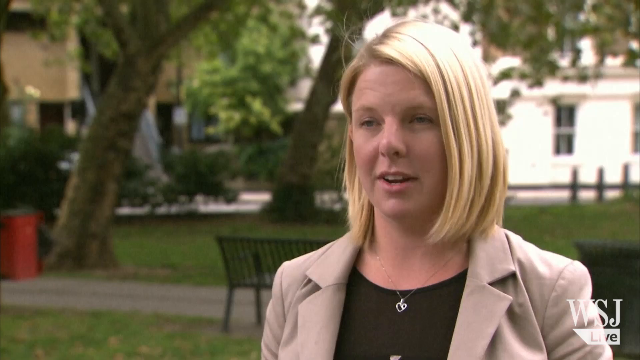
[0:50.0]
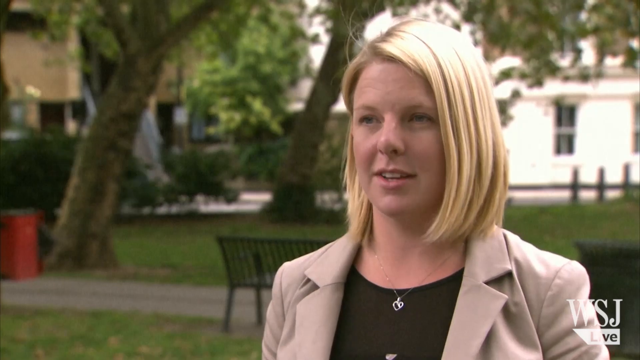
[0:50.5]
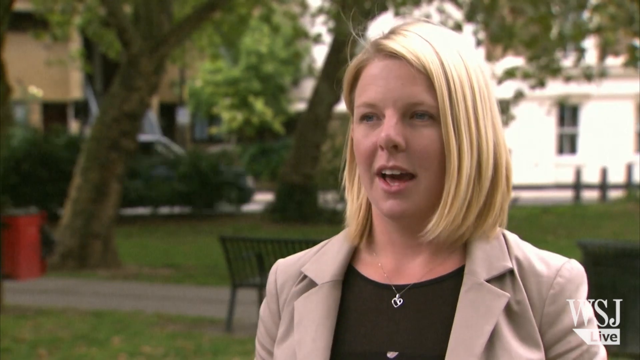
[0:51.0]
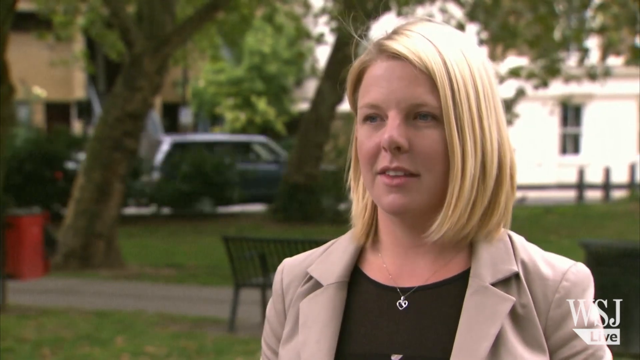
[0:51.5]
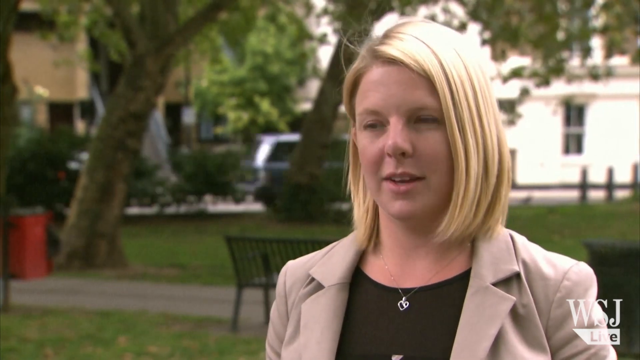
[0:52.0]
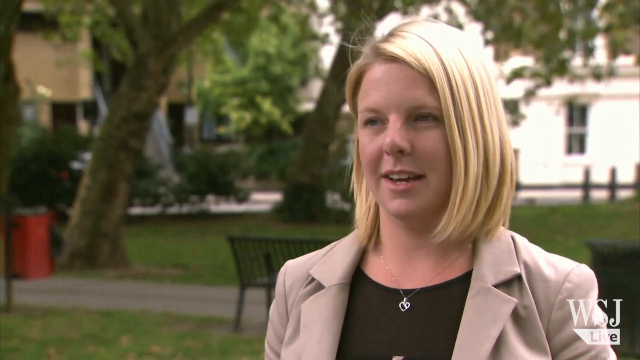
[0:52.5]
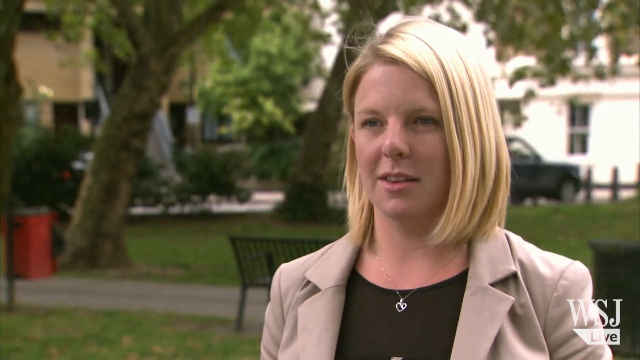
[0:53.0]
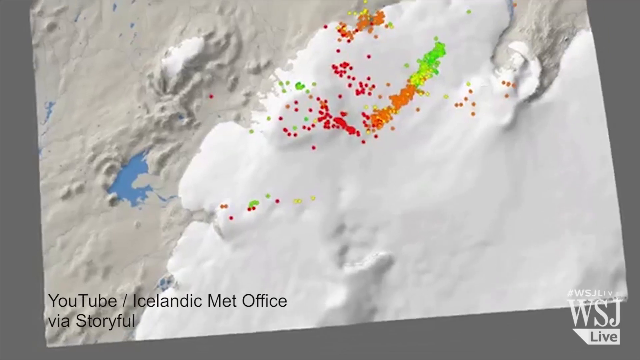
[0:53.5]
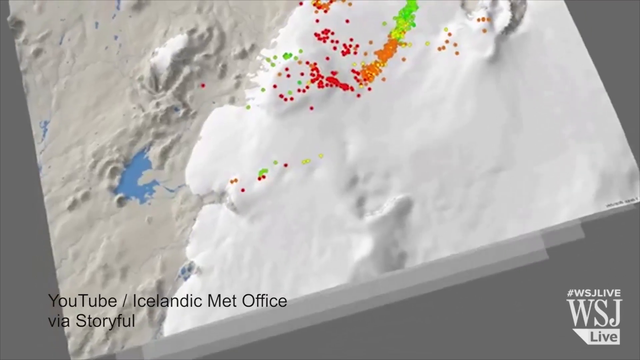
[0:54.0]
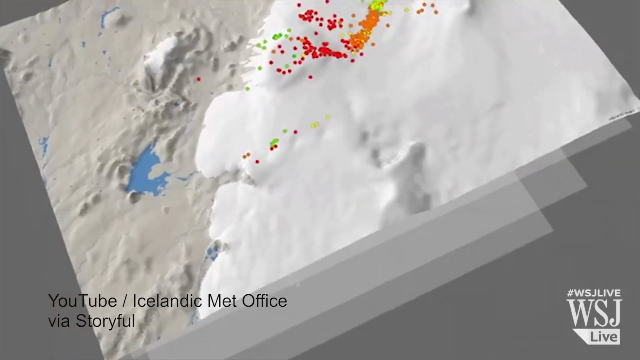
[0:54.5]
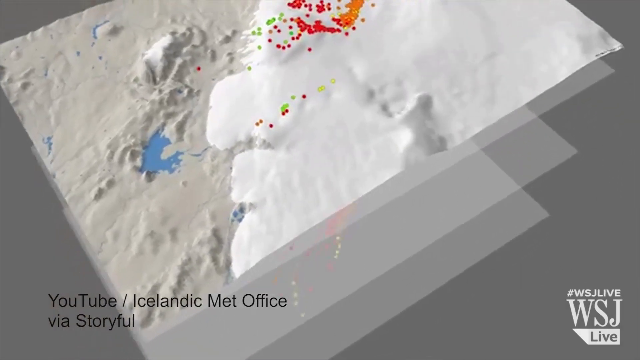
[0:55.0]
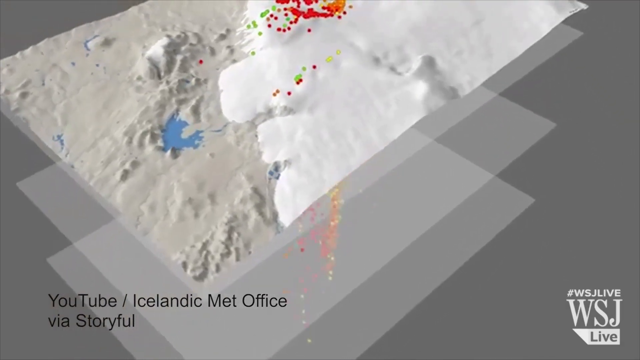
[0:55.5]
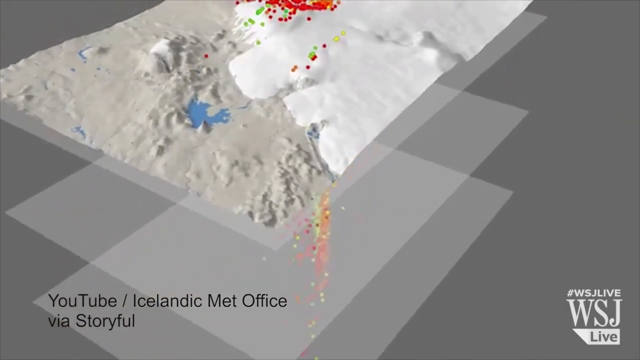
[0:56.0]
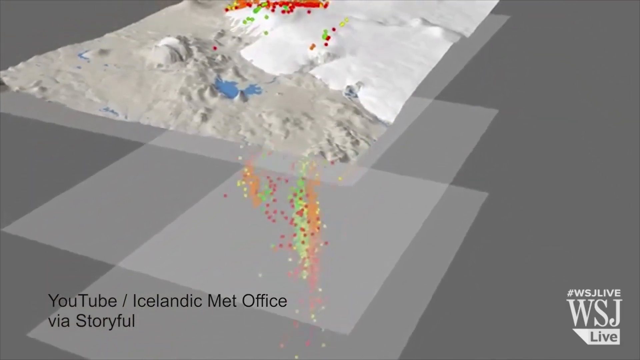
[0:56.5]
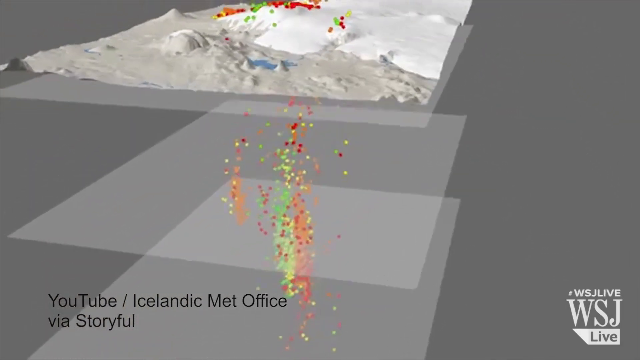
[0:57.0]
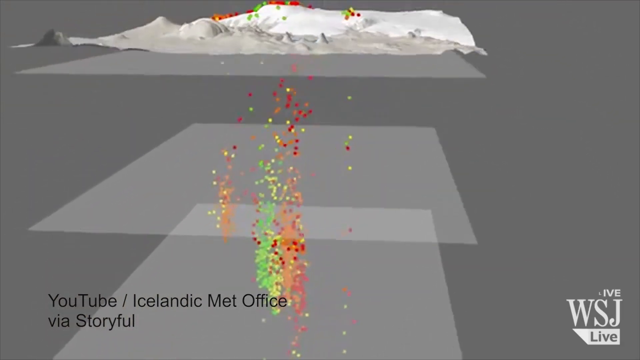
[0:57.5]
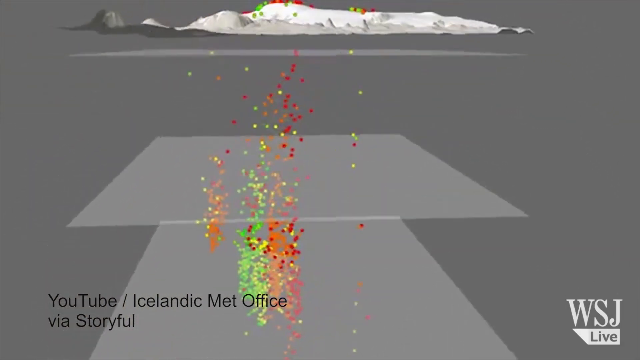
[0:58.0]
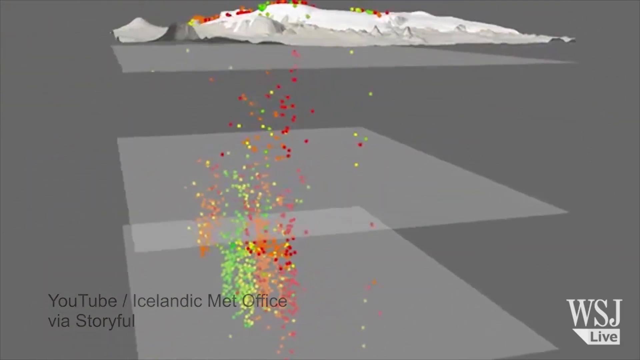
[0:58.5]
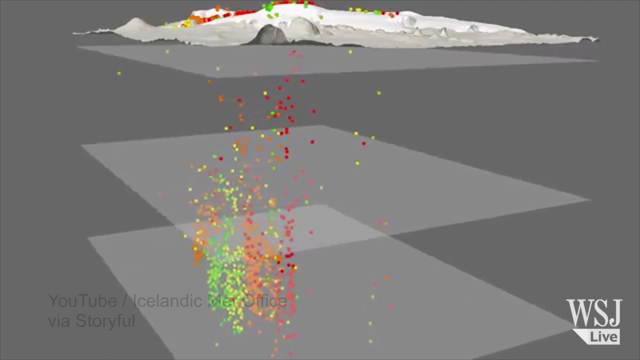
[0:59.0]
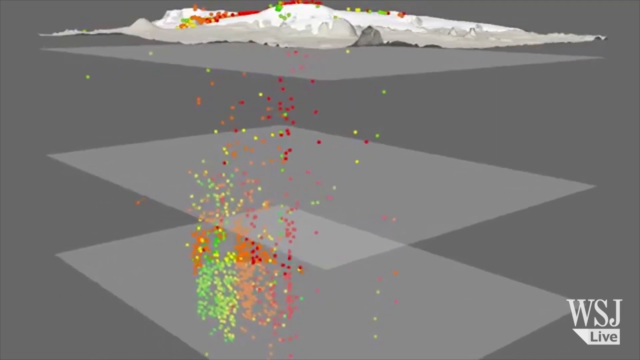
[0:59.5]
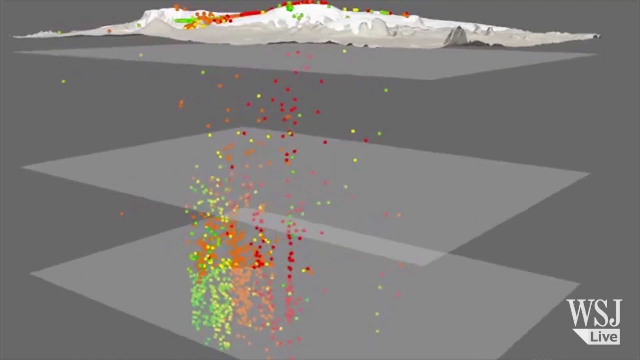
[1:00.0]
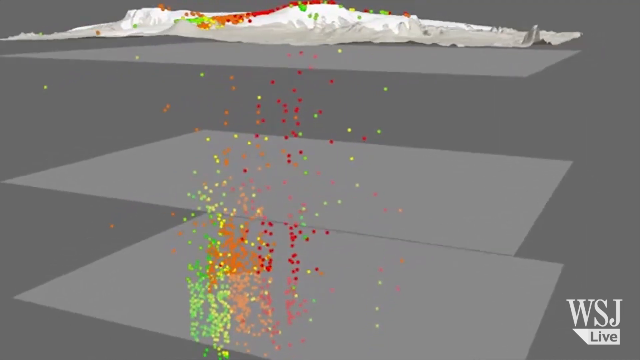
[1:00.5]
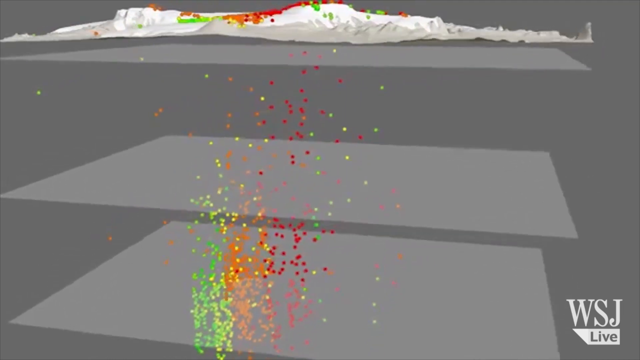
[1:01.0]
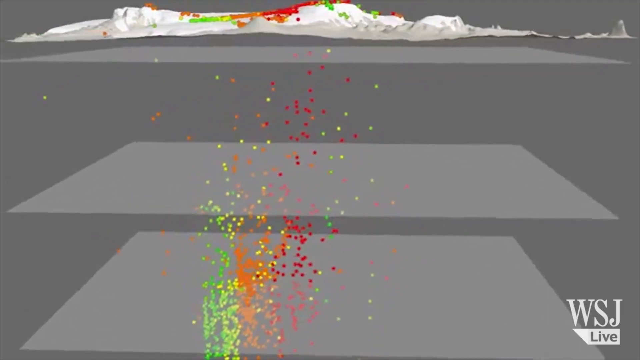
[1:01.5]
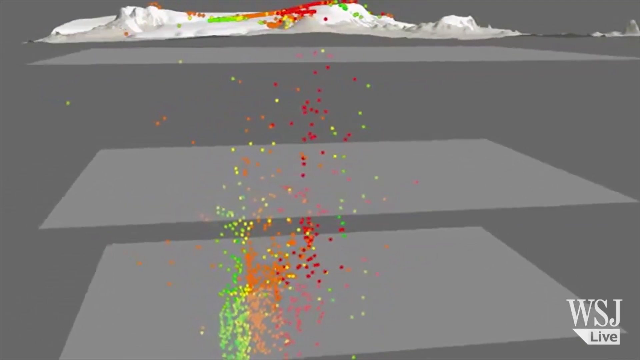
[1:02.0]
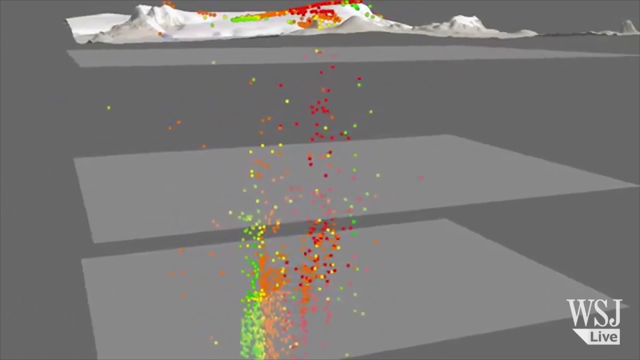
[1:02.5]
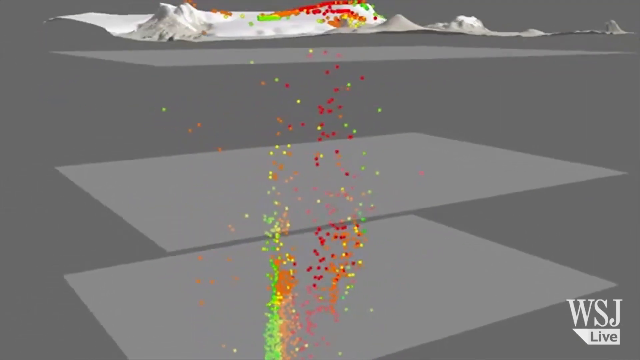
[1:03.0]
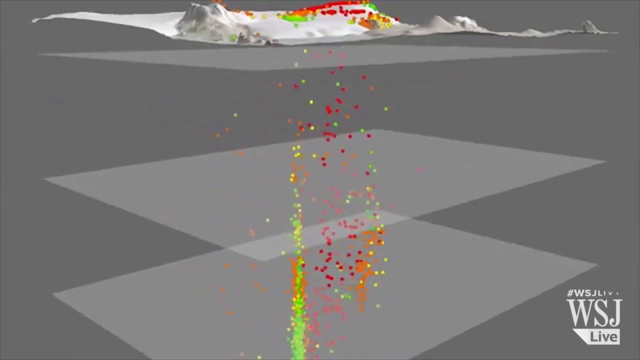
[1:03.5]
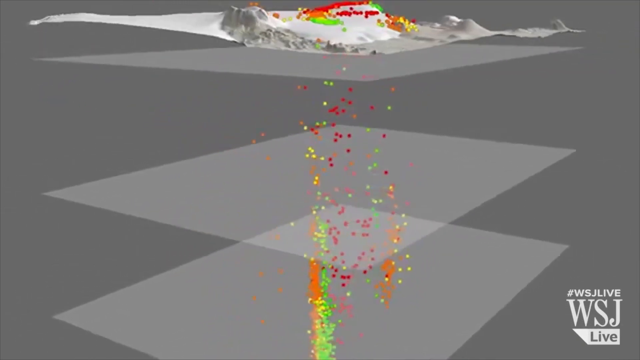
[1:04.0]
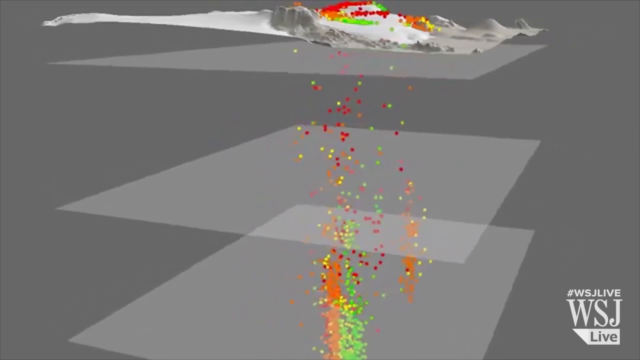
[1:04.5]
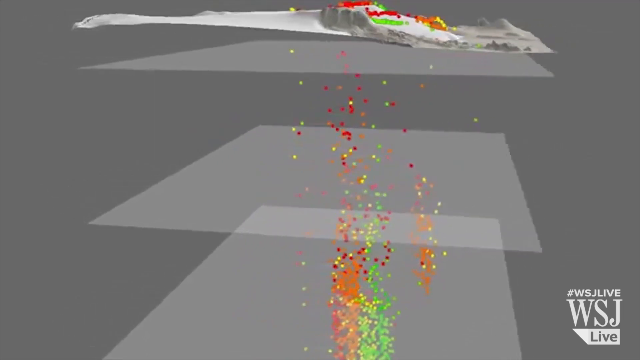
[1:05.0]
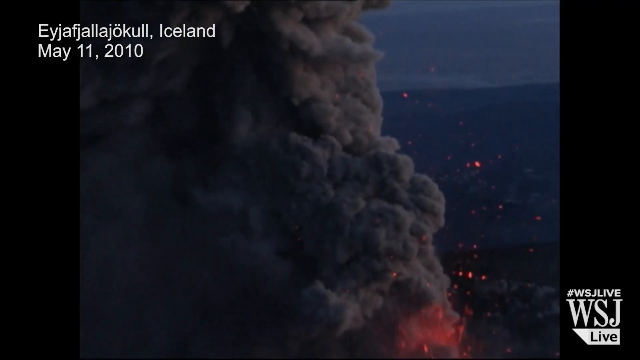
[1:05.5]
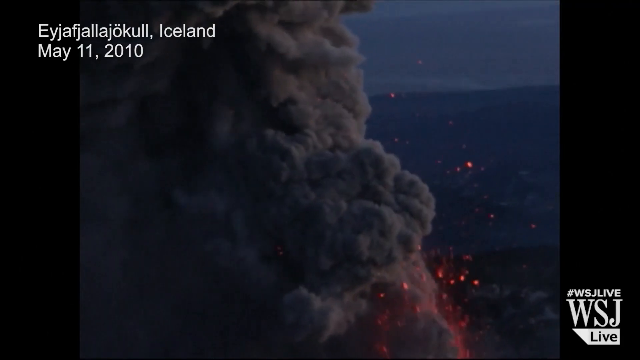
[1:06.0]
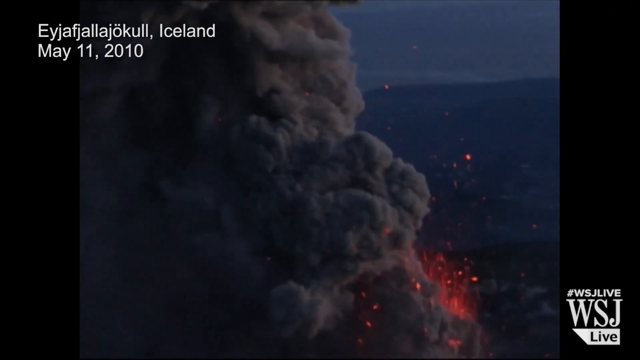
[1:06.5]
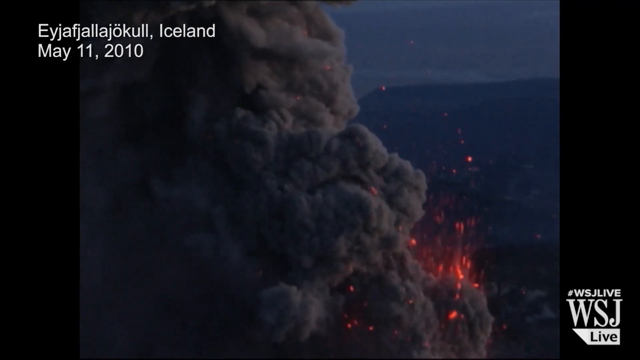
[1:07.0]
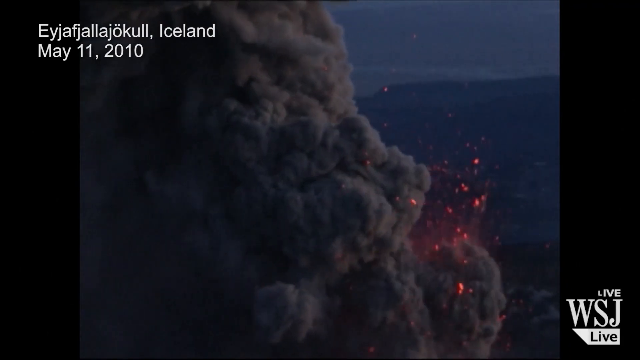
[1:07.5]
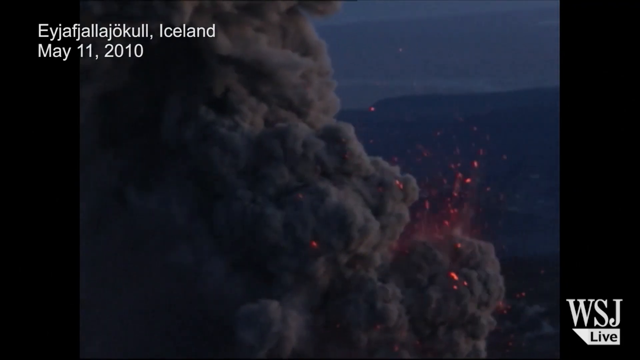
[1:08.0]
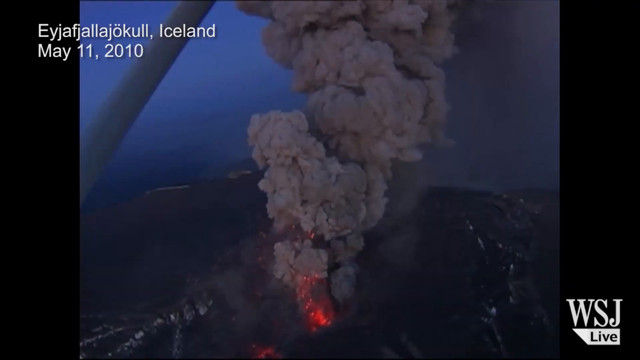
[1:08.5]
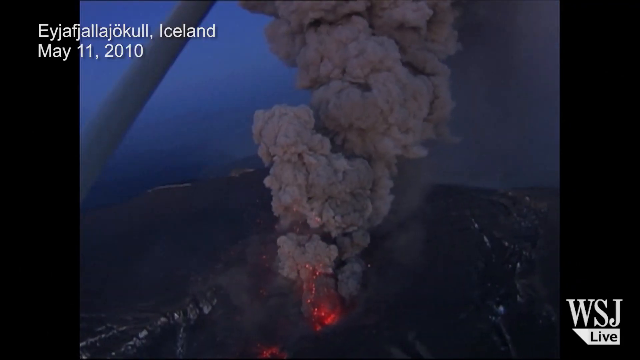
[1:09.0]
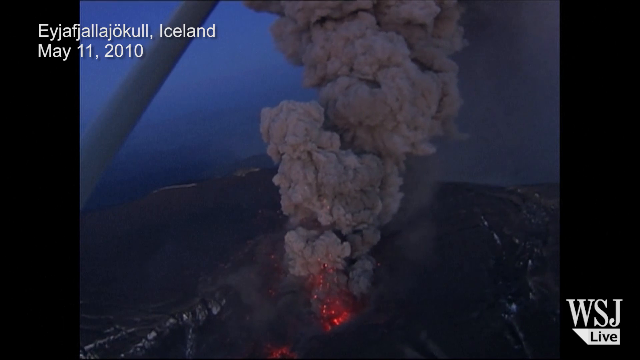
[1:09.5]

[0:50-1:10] A zoomed-in view of the person's book or iPad, at the middle left, takes up most of the screen. In the middle of the iPad is a square box against a white background, showing what appears to be a multicolored image of a volcano exploding. The volcano and mountain are mostly orange, and the background is bluish at the top with some green below. Black text is below the square box, and around it are a number of figures, somewhat like a graph. At the bottom right, the person's hand holds the iPad or tablet, with the thumb on one side and the pointer finger on the back right of the tablet. The scene changes to the woman sitting and looking to the left off camera; she has white skin, short blonde hair, a light brown jacket and a black shirt, and a necklace that hangs slightly below her collarbone. Behind her, cars pass from left to right, two trees stand in the distance, and there is a red trash can to the left of the left tree. The woman continues talking. The scene then changes to a sort of animation of many red, yellow and green dots moving downwards, with the top of the animation appearing to be the land surface. Finally, the video returns to the original location in Iceland, May 11, 2010, in a sort of helicopter aerial shot of the erupting volcano. A lot of gray smoke comes from the volcano, the volcano or mountain itself is a very dark black, and it looks like it is nighttime.